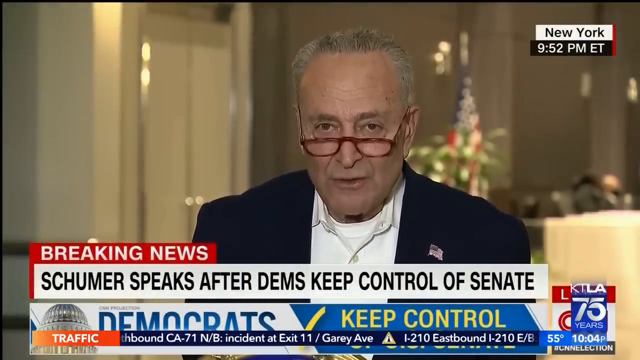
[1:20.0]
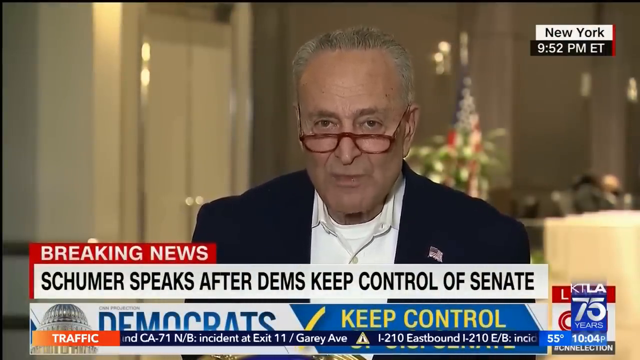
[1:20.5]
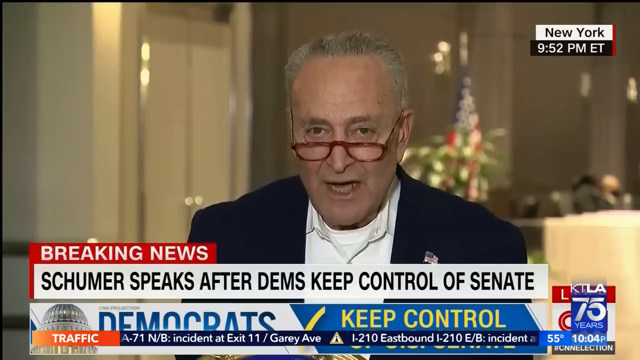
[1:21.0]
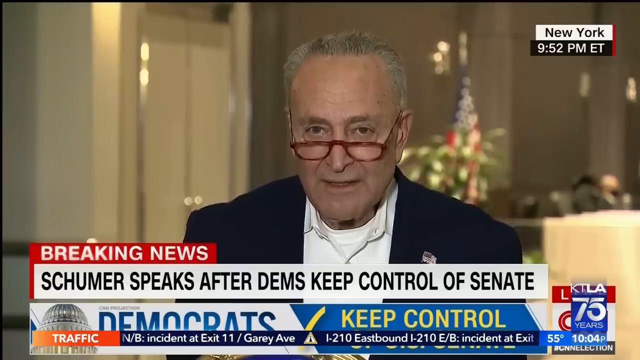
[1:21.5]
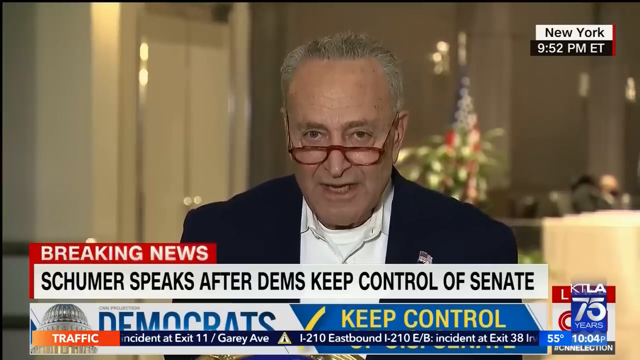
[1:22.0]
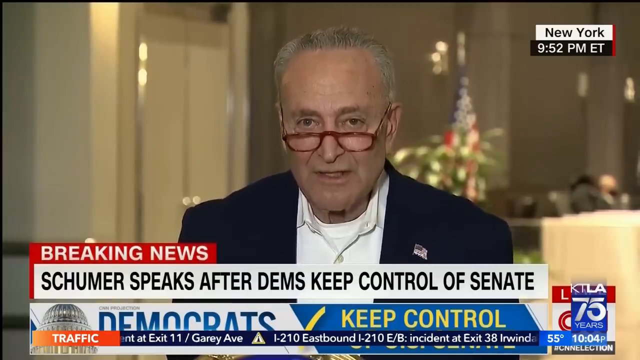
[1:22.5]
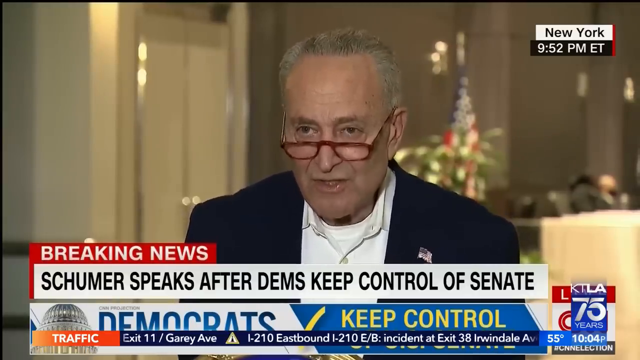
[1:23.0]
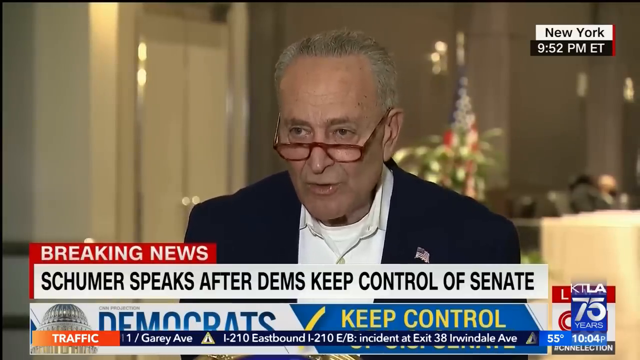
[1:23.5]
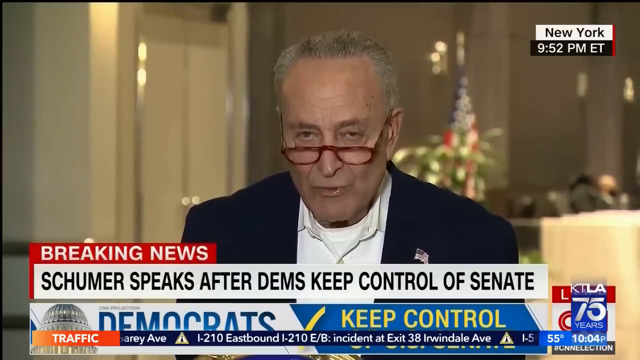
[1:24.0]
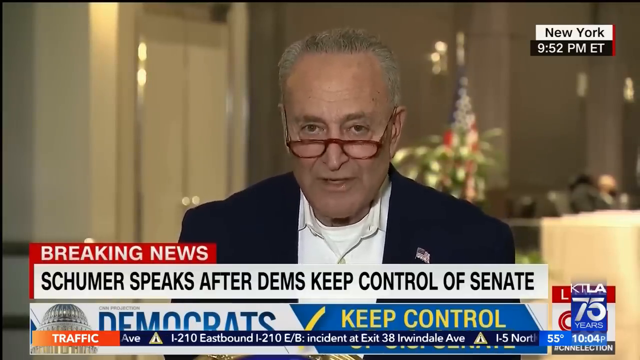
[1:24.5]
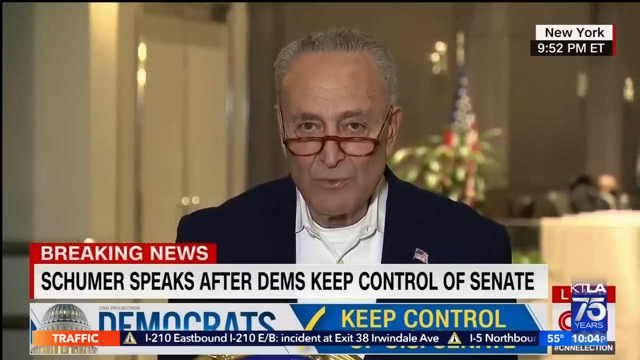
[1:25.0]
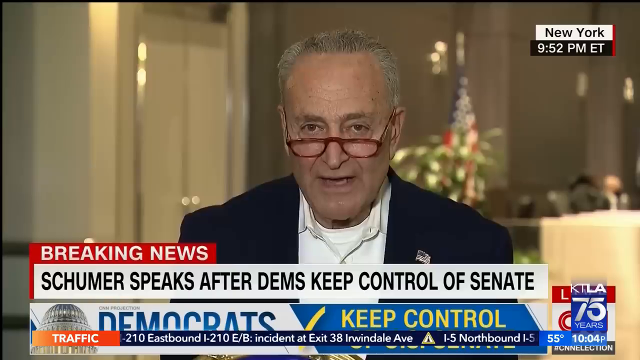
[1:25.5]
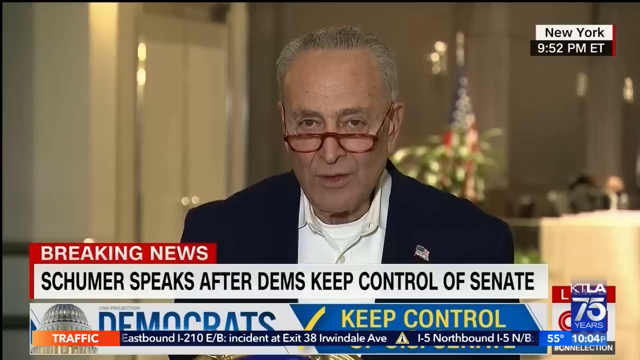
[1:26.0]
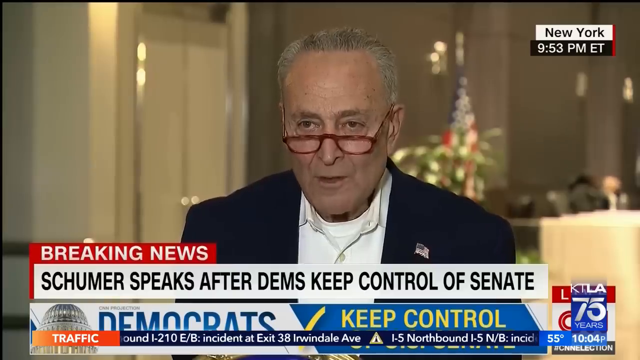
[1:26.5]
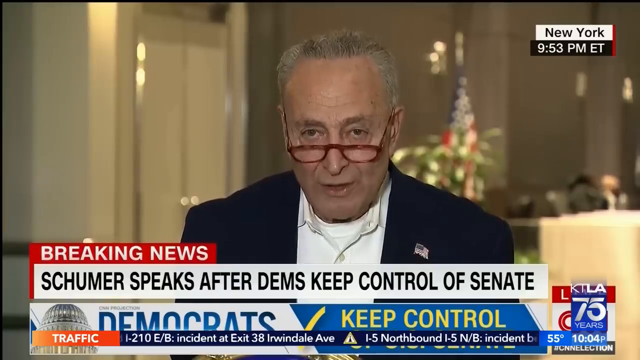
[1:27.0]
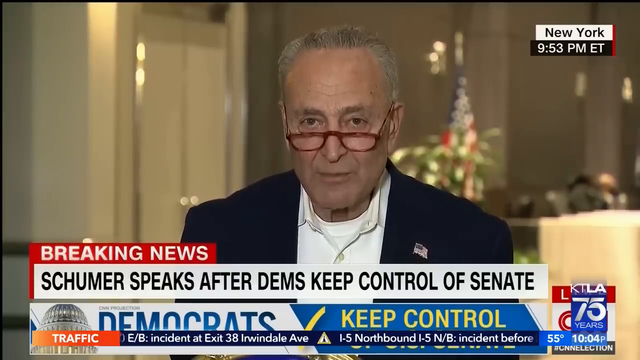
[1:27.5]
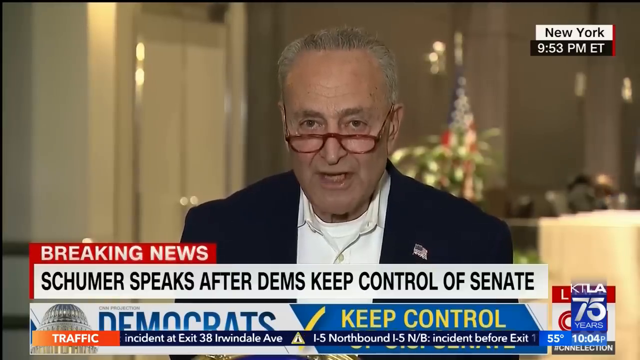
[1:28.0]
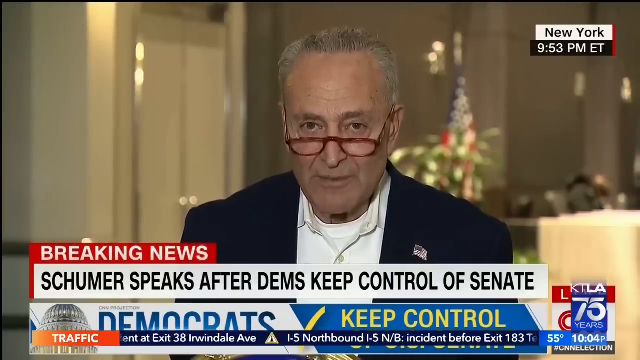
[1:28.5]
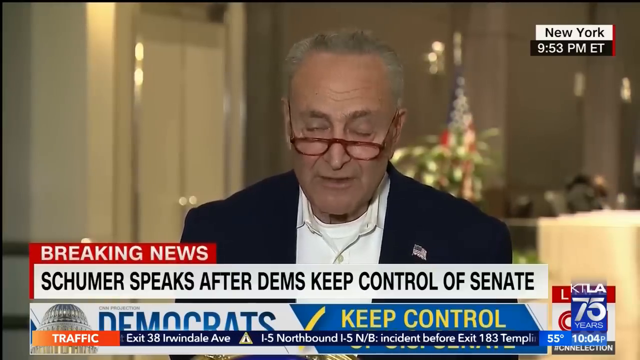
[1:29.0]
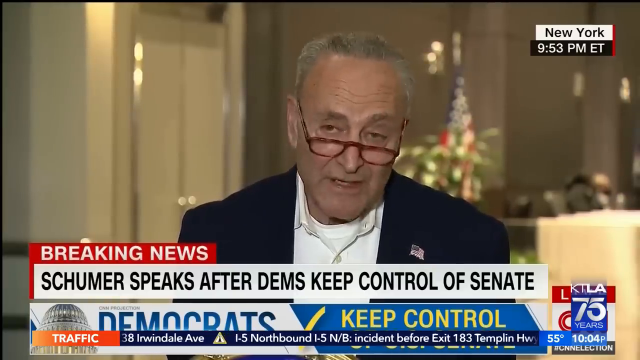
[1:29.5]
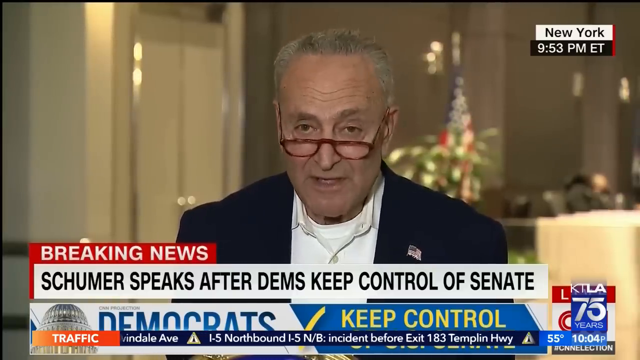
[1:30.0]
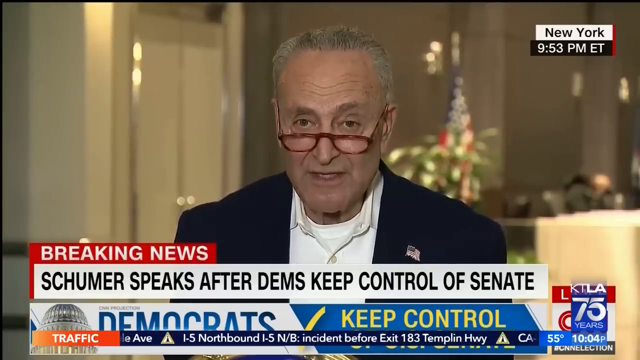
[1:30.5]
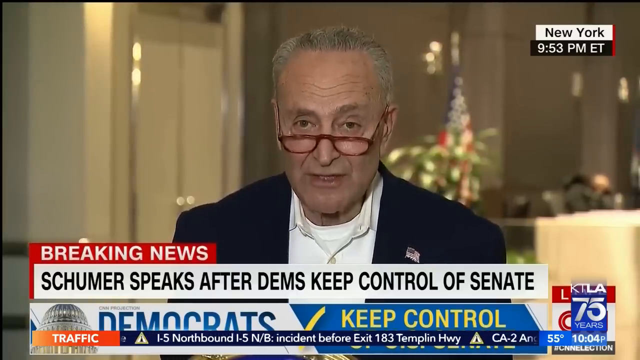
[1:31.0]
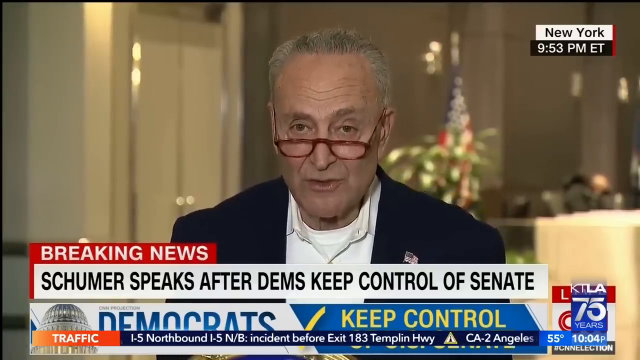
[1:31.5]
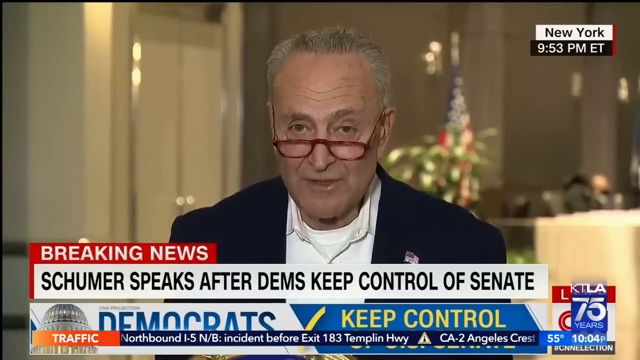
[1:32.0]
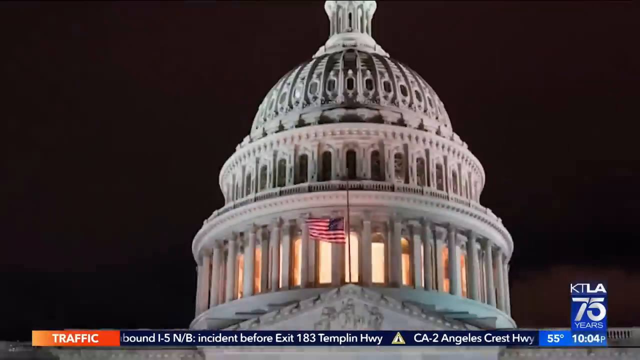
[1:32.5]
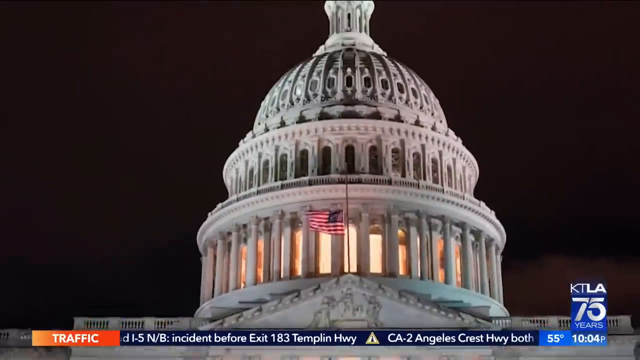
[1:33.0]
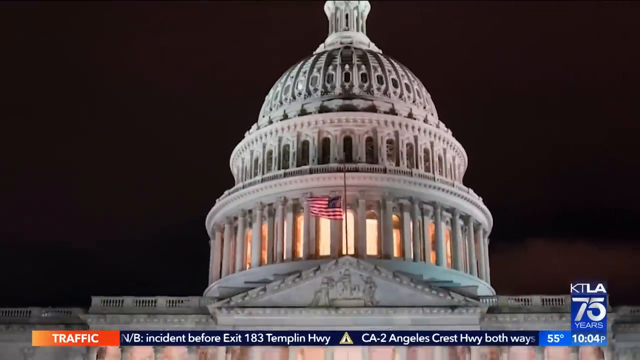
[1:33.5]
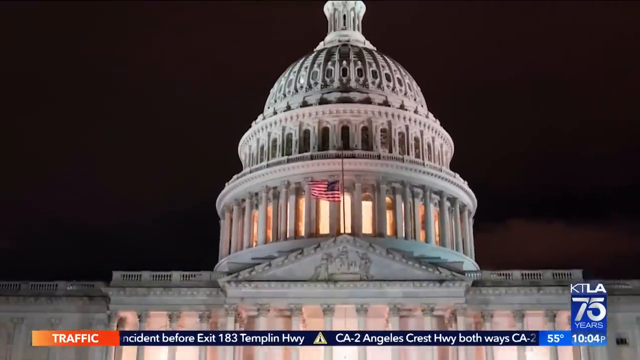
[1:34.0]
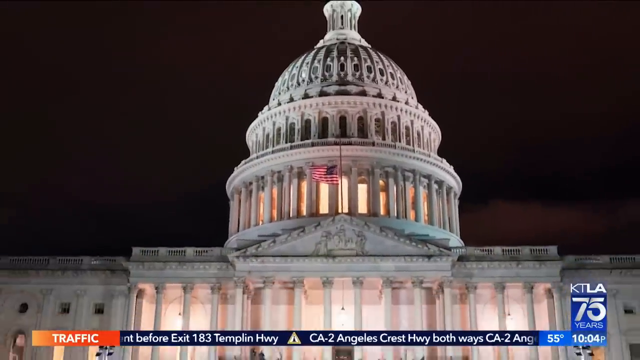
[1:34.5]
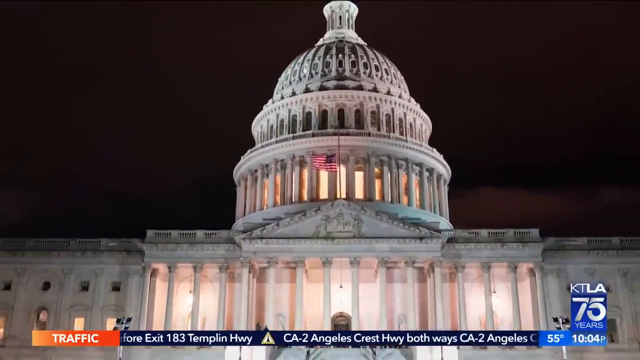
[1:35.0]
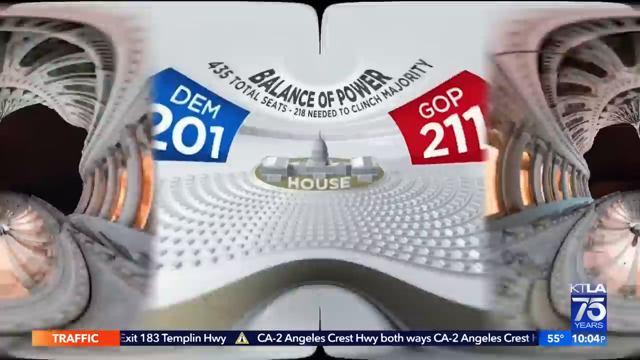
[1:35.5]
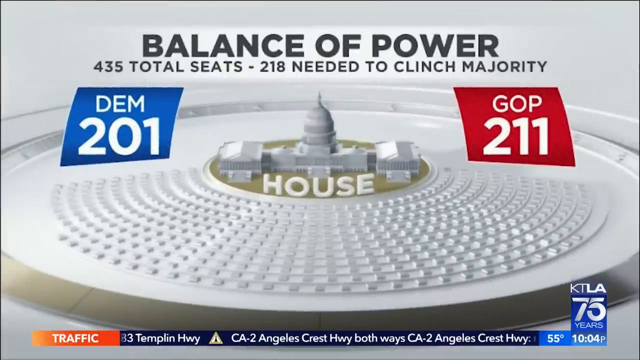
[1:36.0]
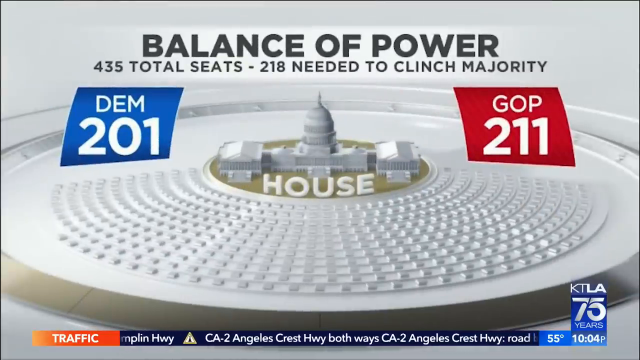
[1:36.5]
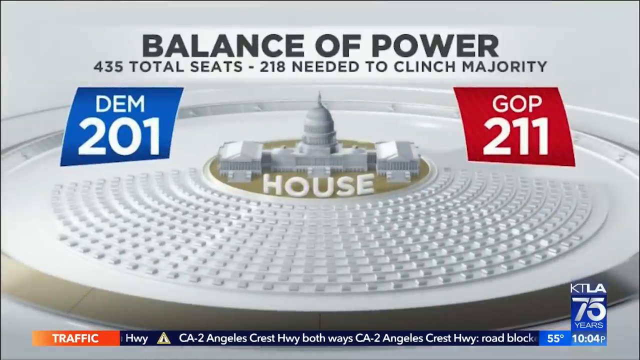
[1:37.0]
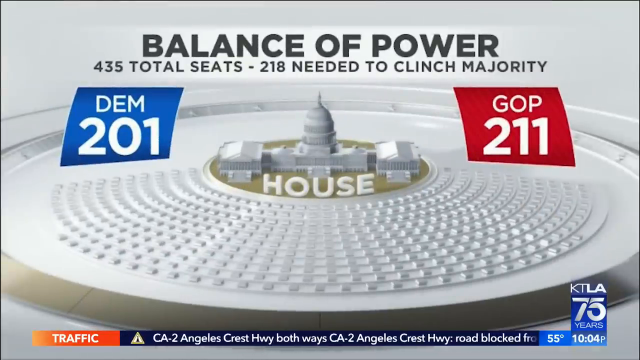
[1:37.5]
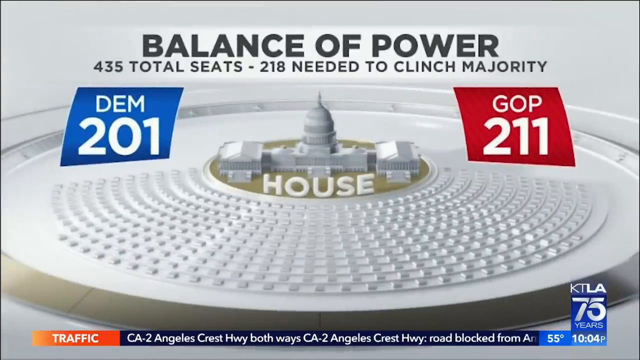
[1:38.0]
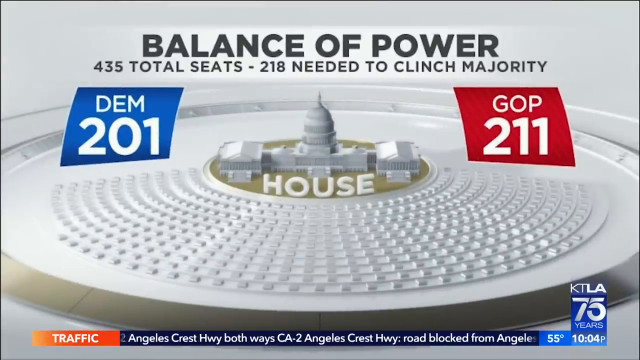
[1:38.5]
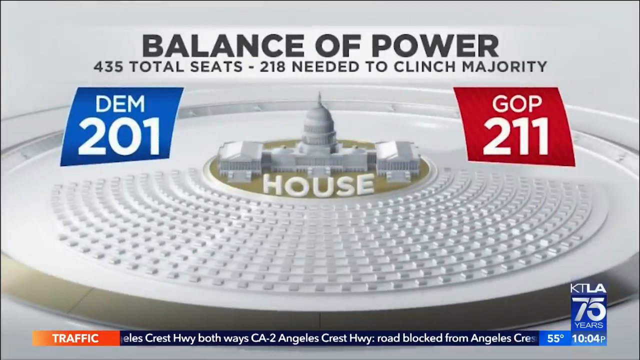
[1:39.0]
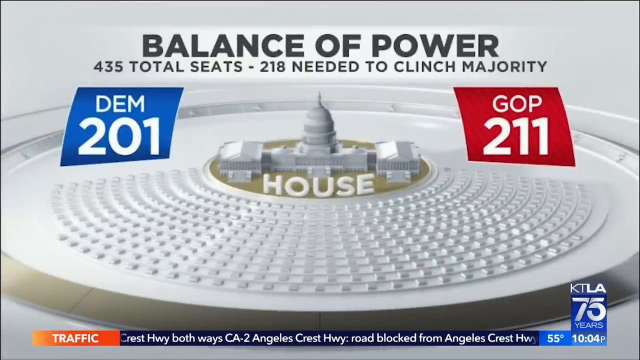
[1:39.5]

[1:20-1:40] Schumer is still speaking, with a blurb underneath reading "Dems keep control". The coverage switches to a balance of power screen: 435 total seats, 218 needed to clinch majority, with the GOP apparently at 211 to 201 in the House. Back on the same station, Schumer speaks in the same location, with a U.S. flag. The footage cuts to a picture of the Capitol building with a U.S. flag flying in front of it, then back to the balance of power screen, which shows an image of the House and the Capitol dome with all the seats of Congress laid out in front of it, presumably showing the current state of the election, GOP in red and Dems in blue.